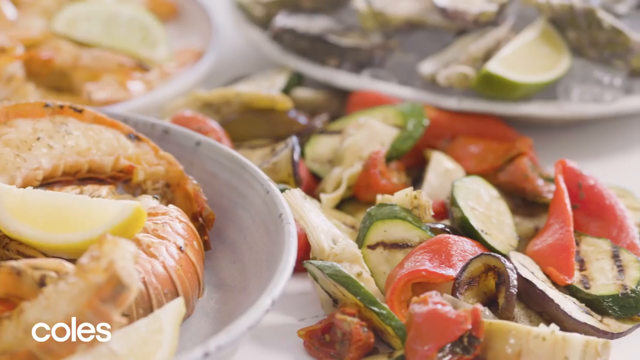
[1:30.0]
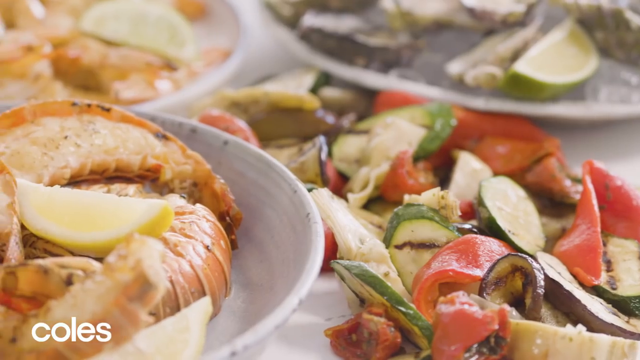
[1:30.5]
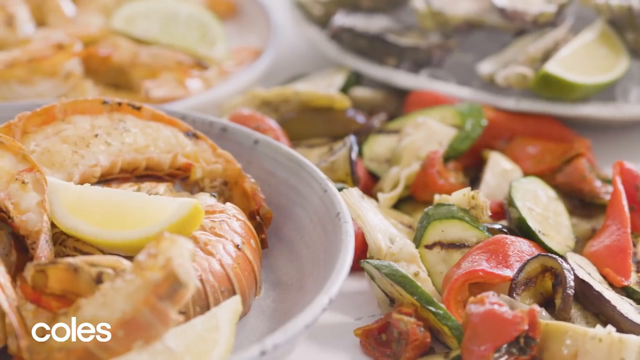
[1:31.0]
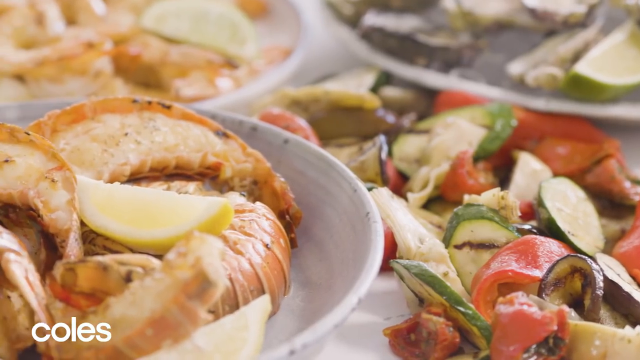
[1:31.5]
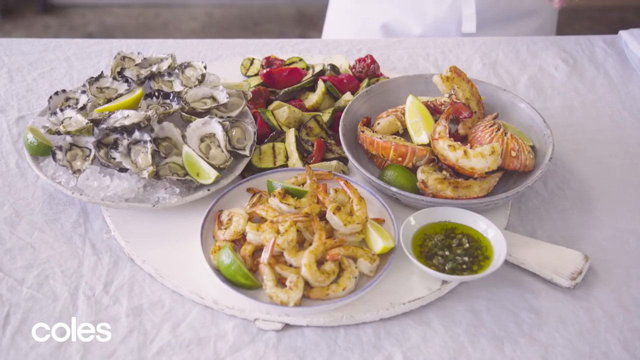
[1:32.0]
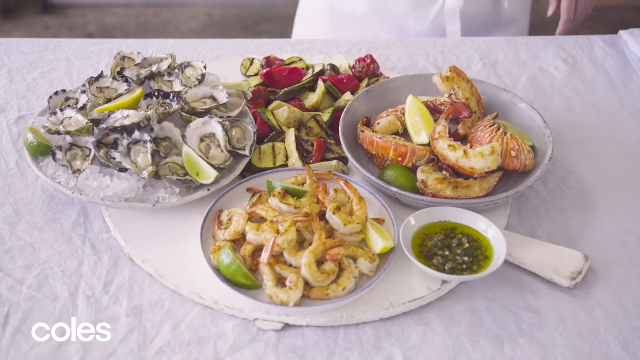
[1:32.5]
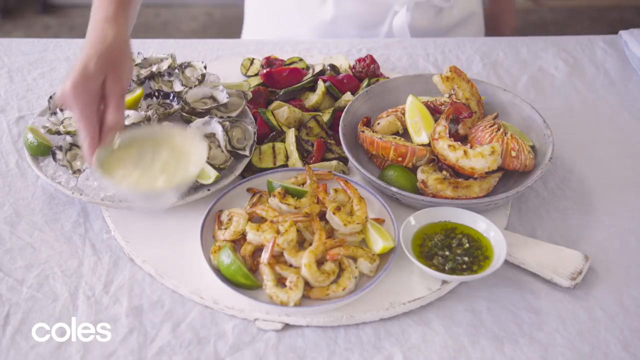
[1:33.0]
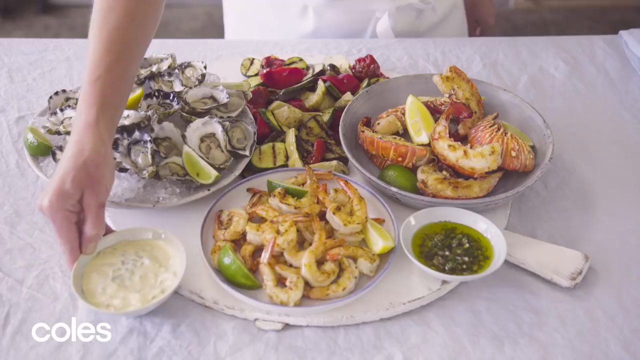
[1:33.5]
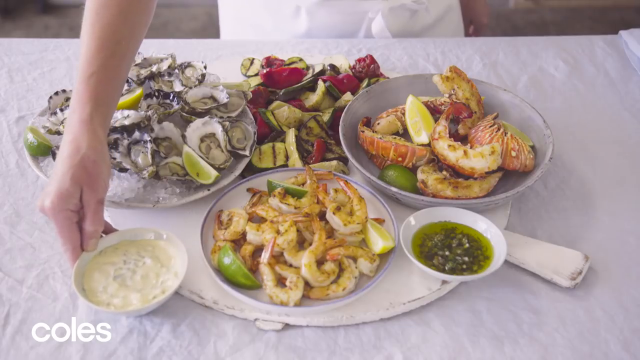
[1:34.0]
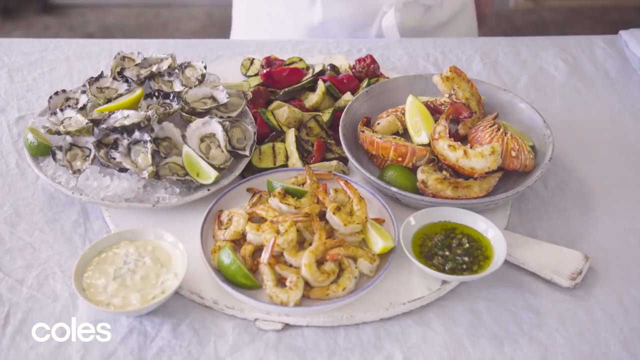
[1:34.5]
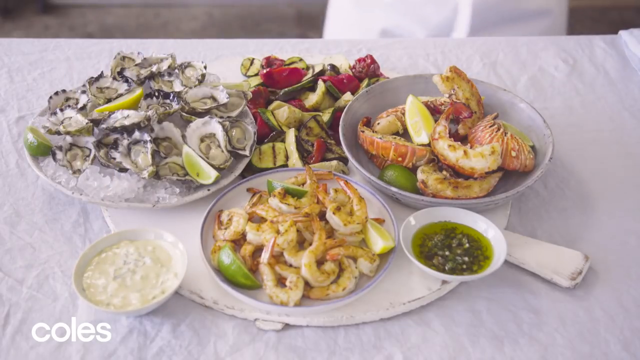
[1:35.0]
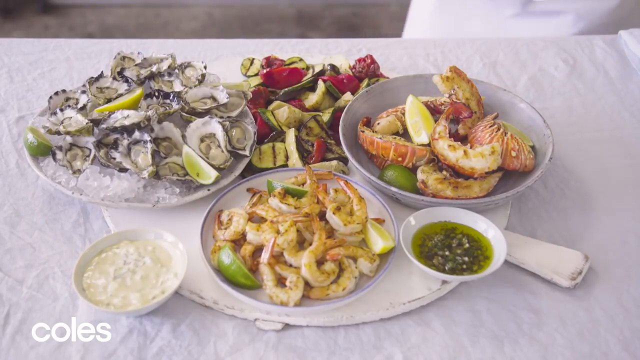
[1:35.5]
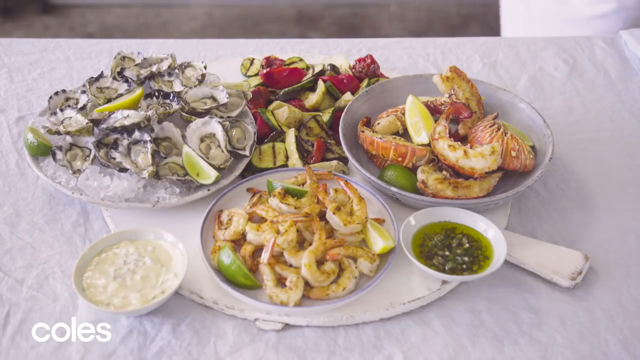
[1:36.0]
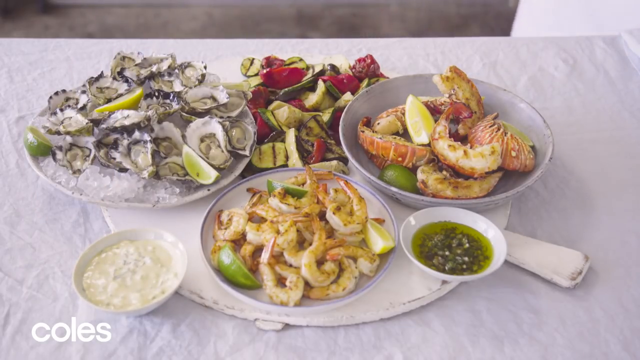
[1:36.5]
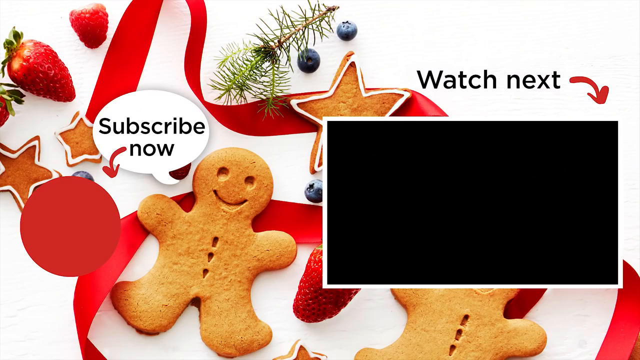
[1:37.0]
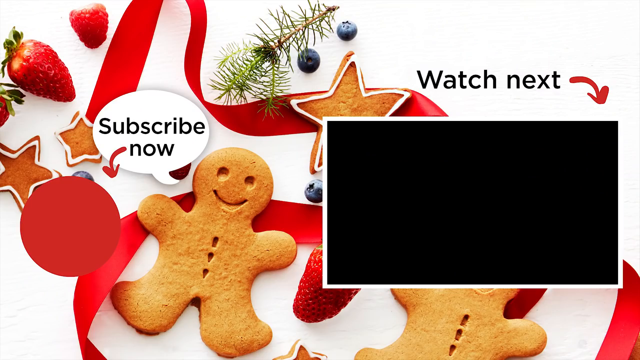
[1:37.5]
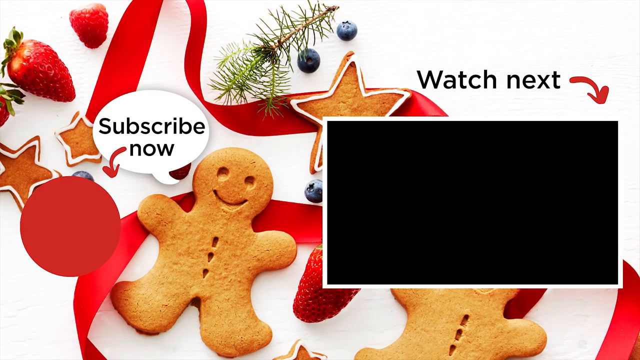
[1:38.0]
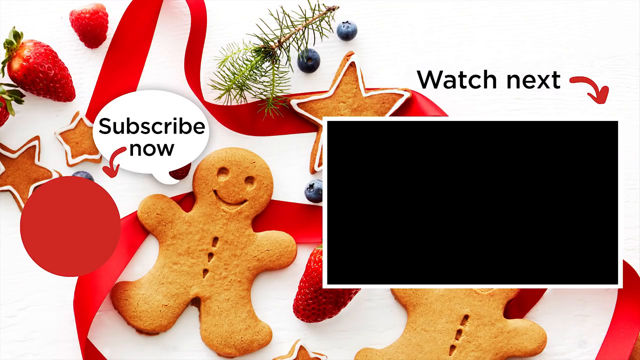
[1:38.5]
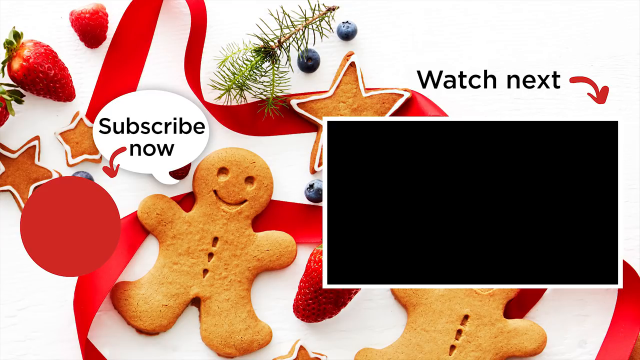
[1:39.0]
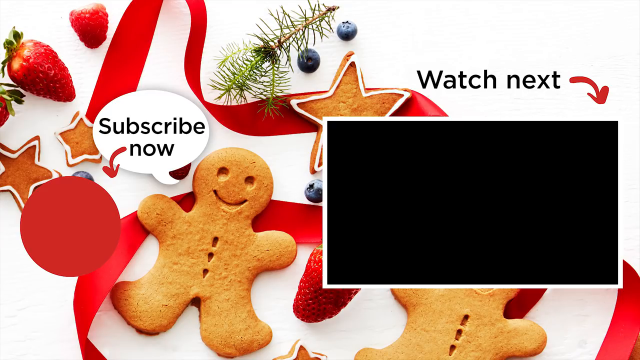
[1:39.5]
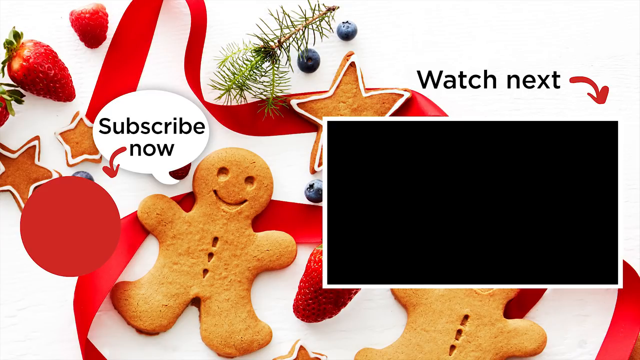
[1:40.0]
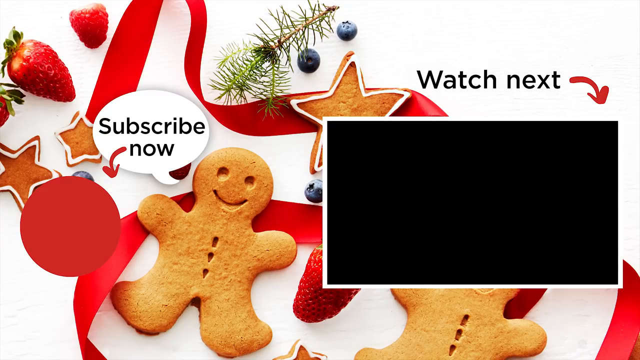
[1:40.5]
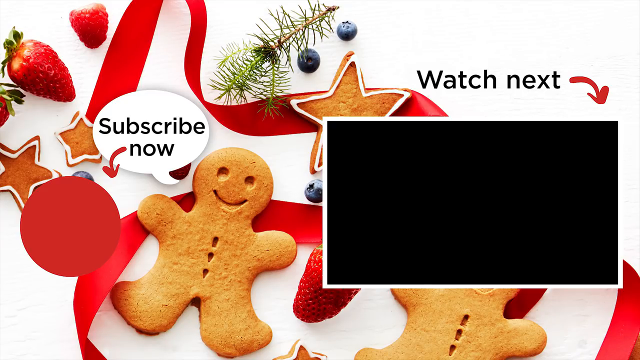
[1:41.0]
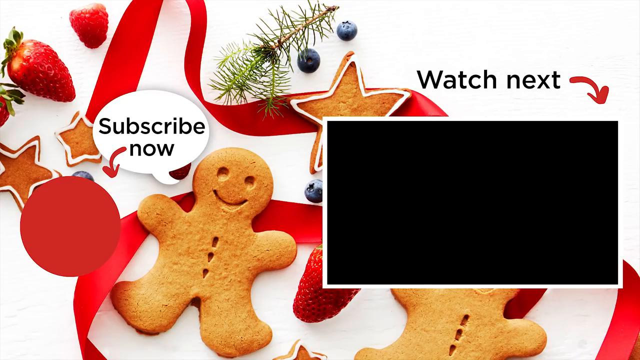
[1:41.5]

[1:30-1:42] Panning close-up views show the fully assembled platter, with bowls and dishes of the different foods such as the lobster tails and the oysters on ice. A full view of the platter shows small bowls of dipping sauces on the sides and corners. The video then transitions to a YouTube outro with gingerbread decorations, showing "subscribe now" and "watch next" and pointing toward another video shown on the screen.